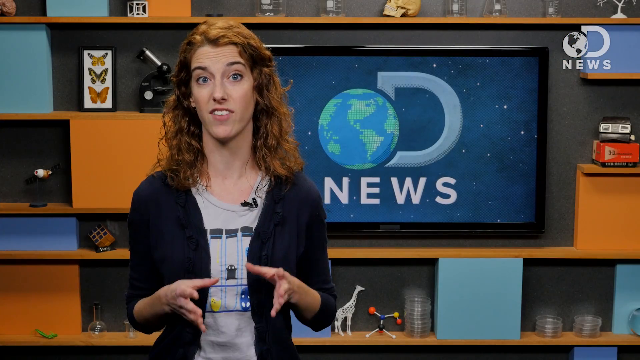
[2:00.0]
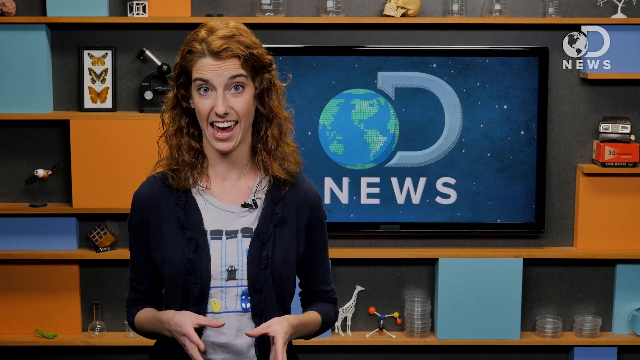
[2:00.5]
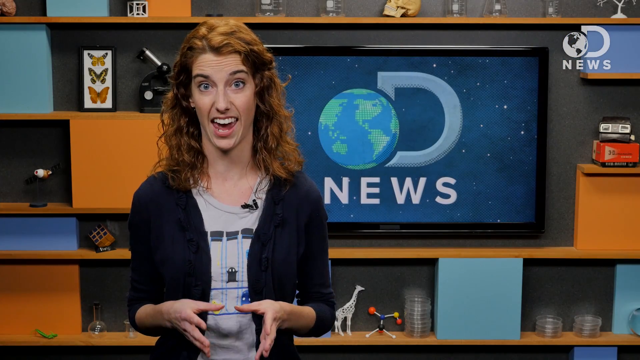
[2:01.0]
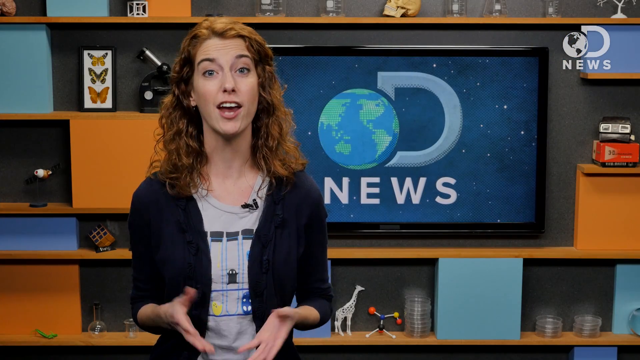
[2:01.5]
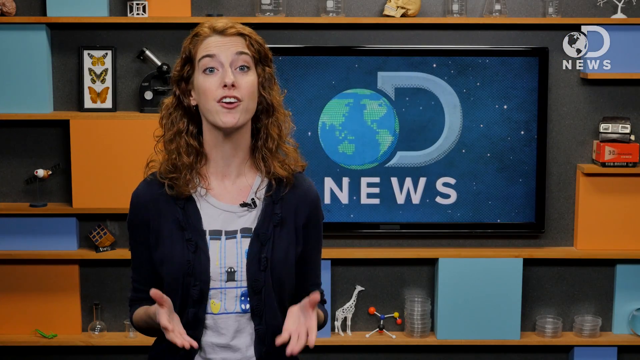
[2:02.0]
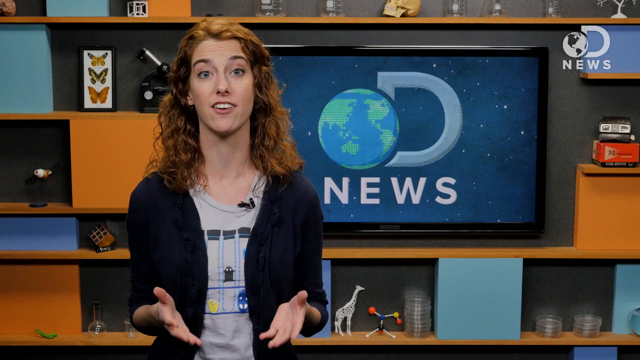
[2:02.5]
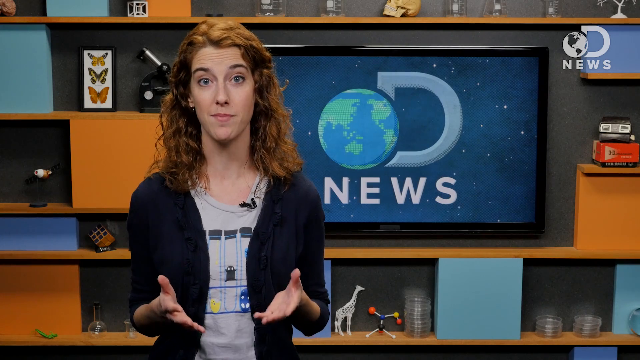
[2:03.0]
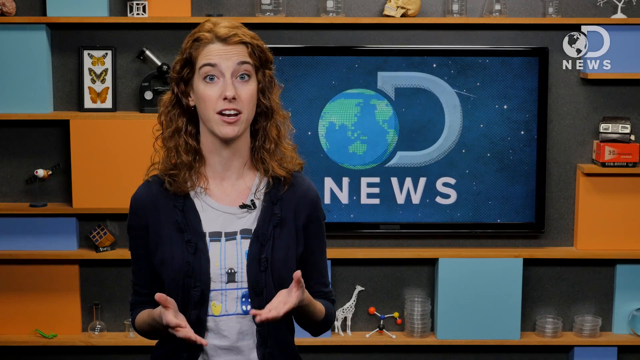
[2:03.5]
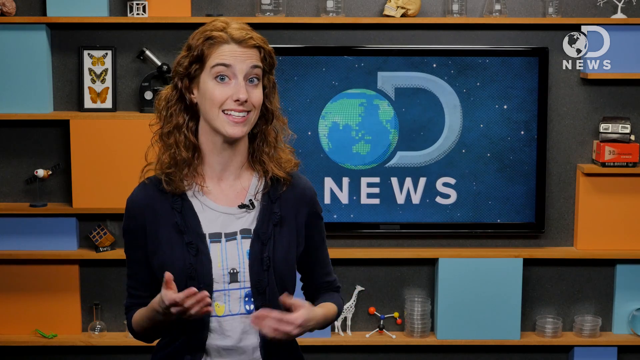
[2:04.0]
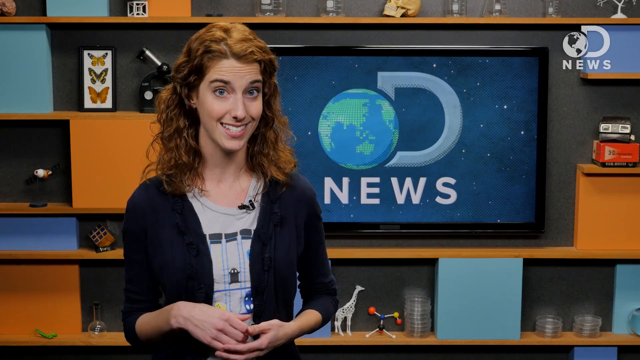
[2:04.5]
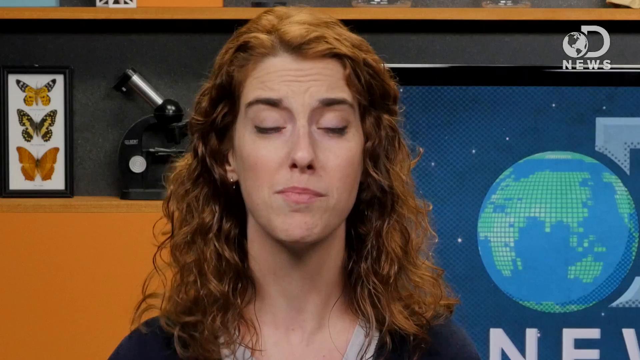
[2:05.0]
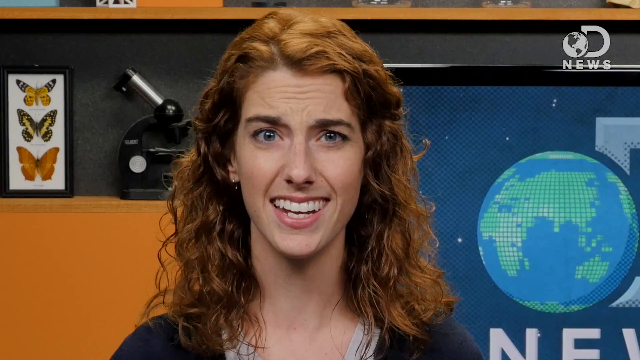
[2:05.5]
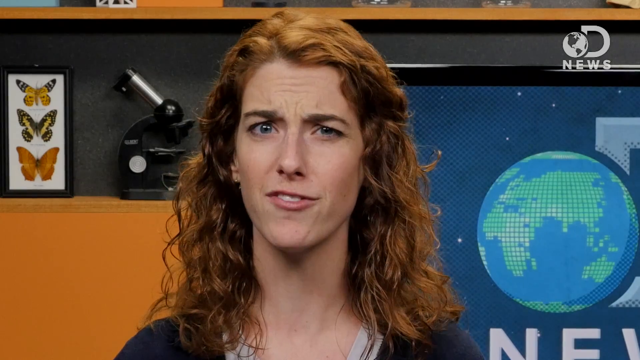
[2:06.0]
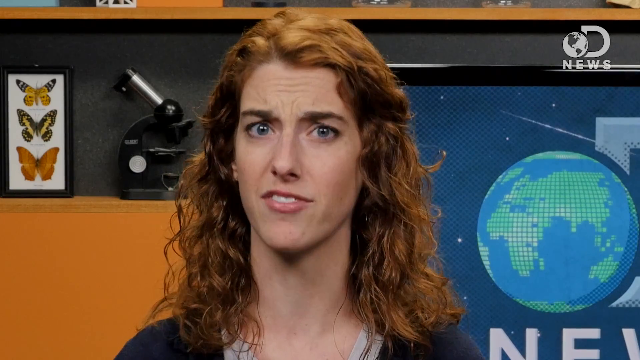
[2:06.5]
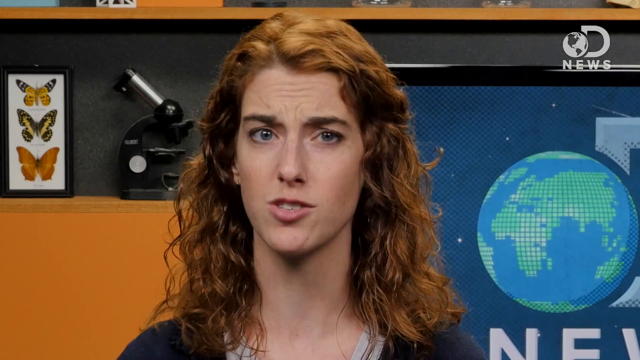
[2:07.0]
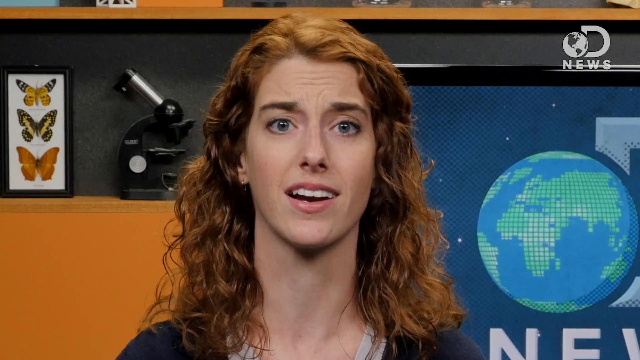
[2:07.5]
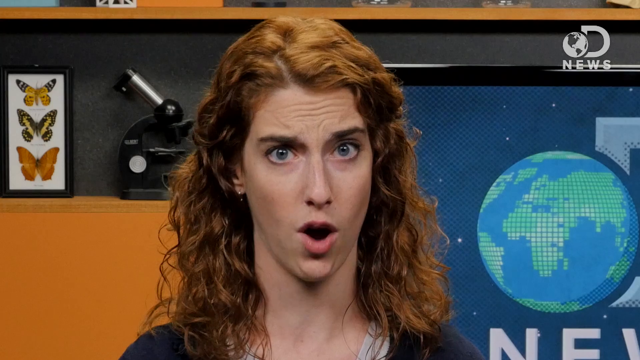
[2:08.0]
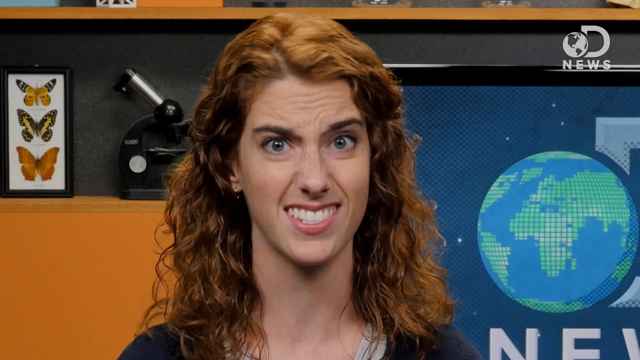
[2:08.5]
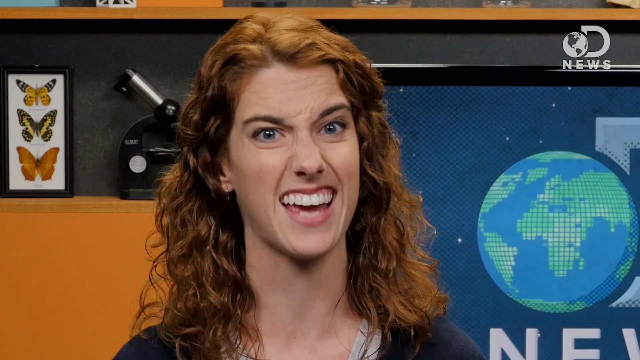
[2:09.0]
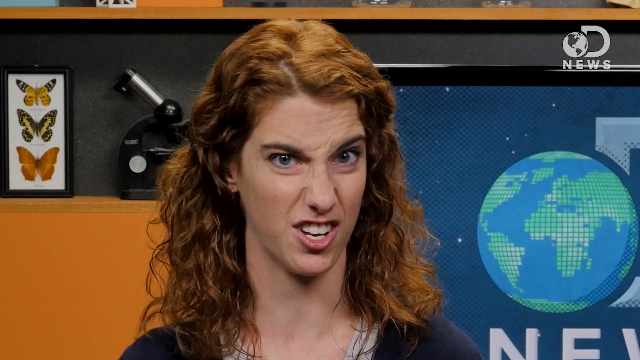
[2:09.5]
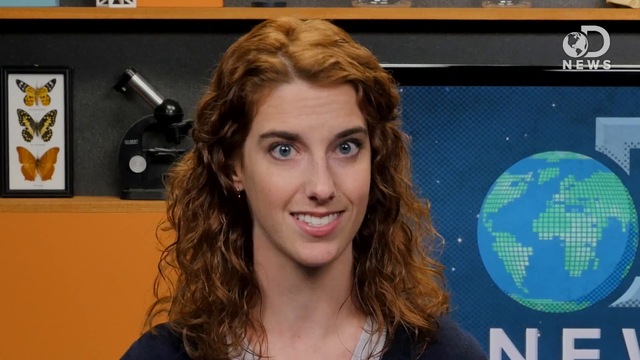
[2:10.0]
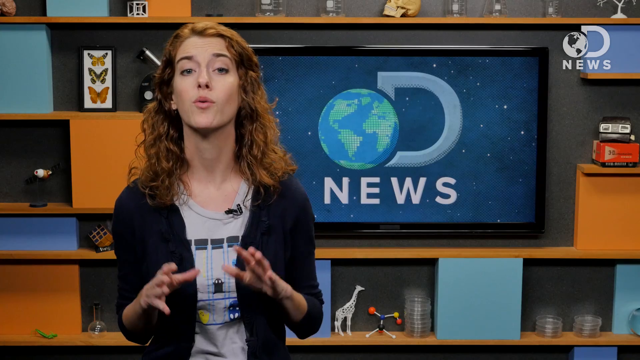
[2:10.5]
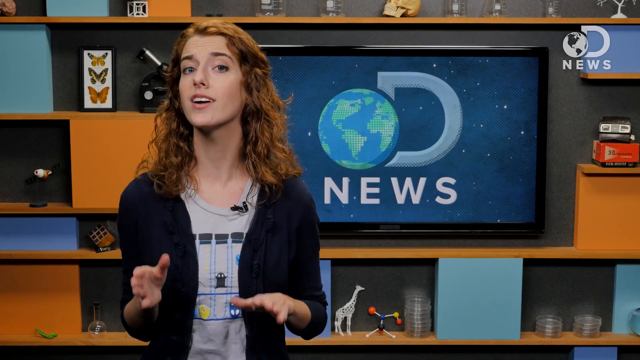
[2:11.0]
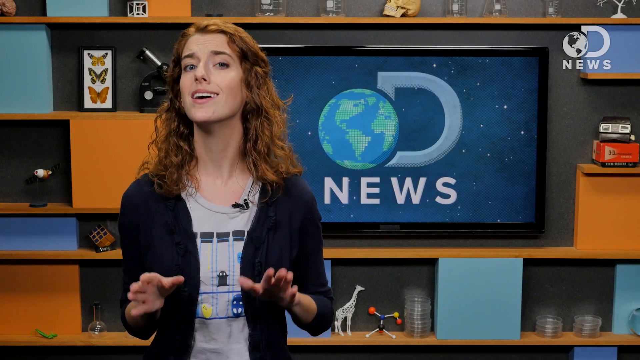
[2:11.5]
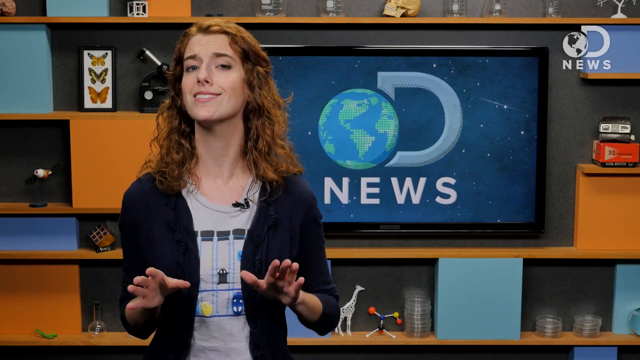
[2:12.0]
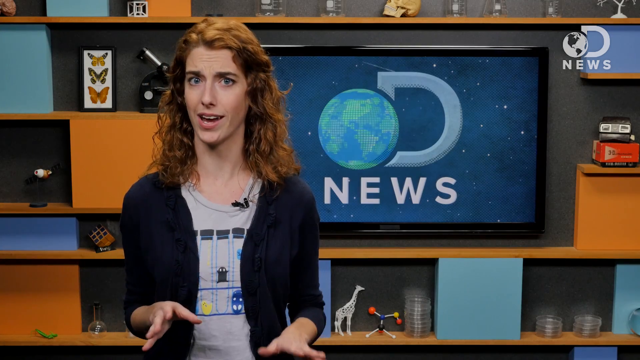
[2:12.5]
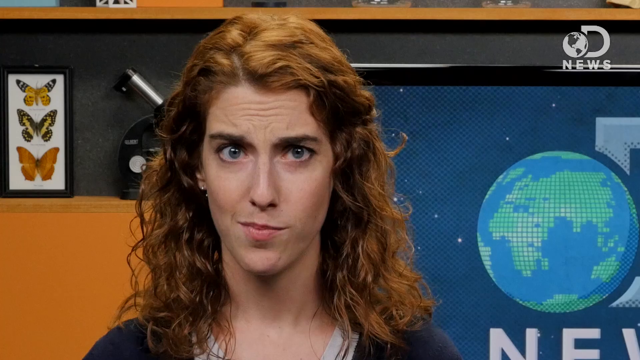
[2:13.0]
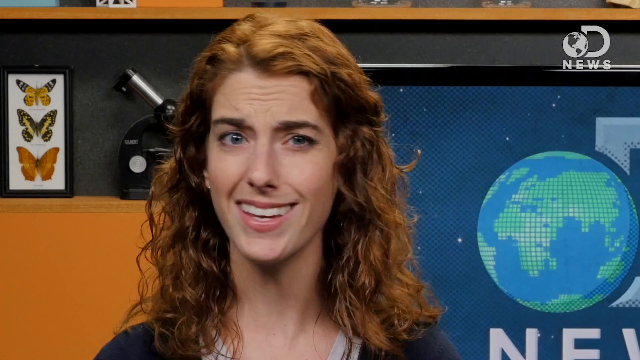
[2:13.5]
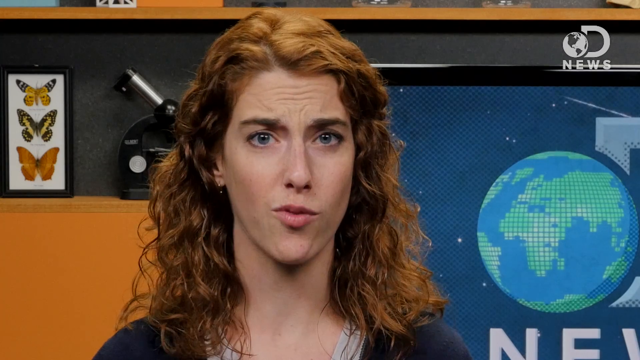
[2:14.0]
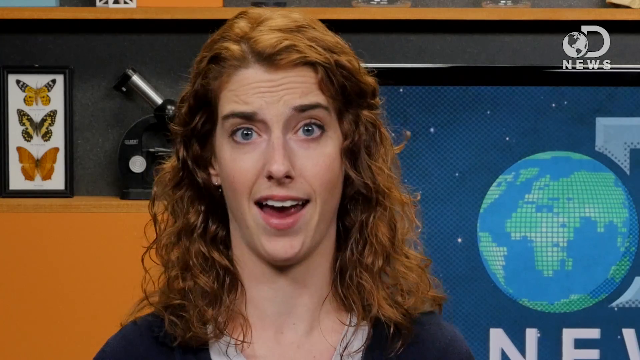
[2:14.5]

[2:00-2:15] The lone white woman with red hair and white skin talks directly to the camera, appearing to discuss the nutritional aspects of vegetables. She wears a black sweater over a gray t-shirt and appears to be in a news studio. Behind her are light blue, dark blue and orange, a large TV monitor displaying the word "news" with a spinning globe icon above it, and a framed picture of three butterflies. She is very expressive with her hands and face, and the camera appears to zoom in and out to show close-ups of her face as she talks.